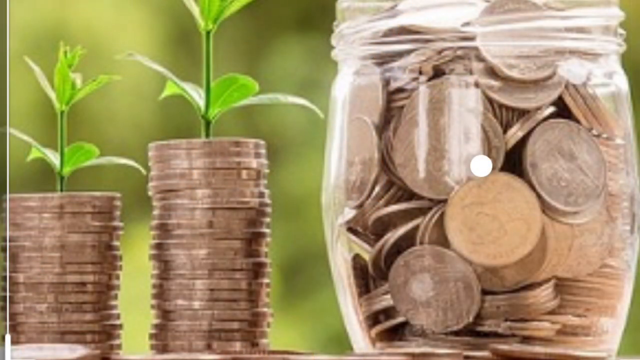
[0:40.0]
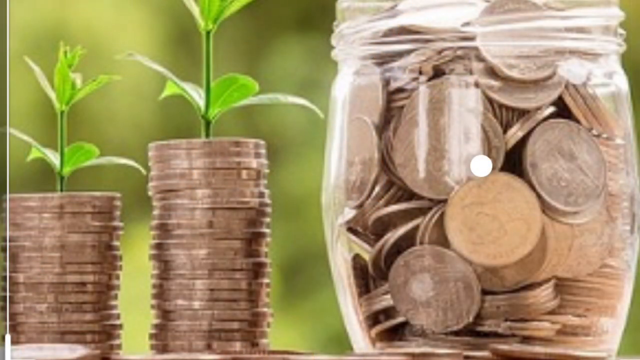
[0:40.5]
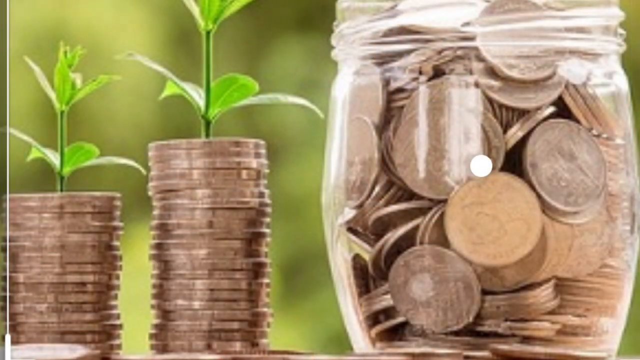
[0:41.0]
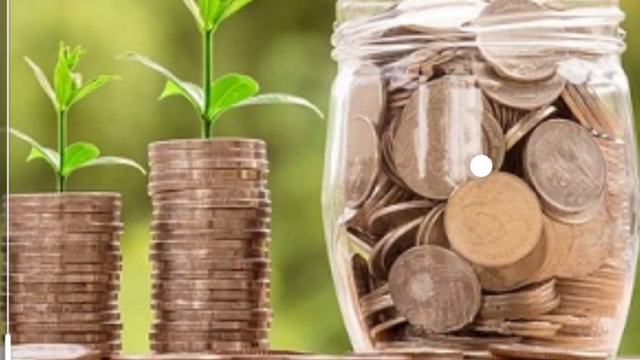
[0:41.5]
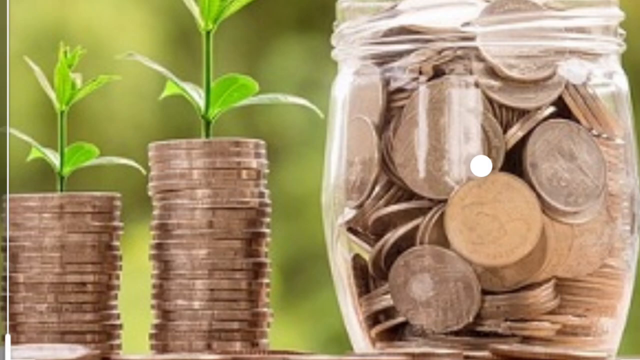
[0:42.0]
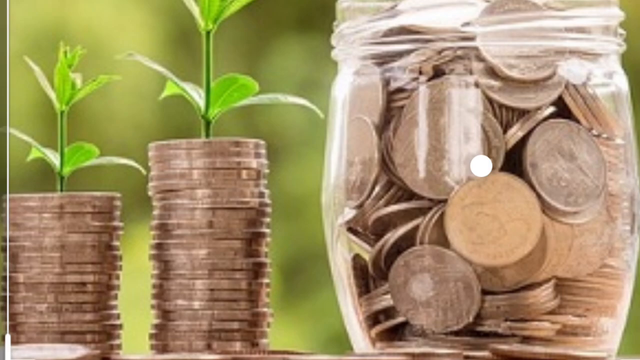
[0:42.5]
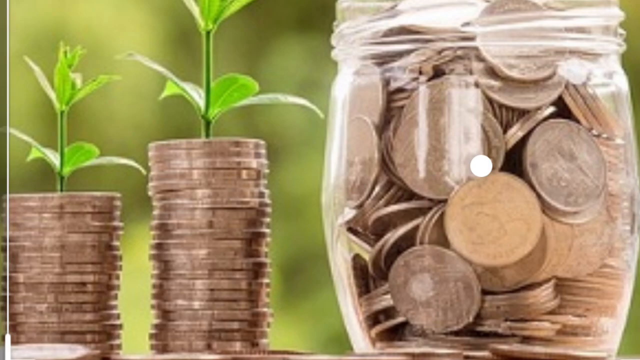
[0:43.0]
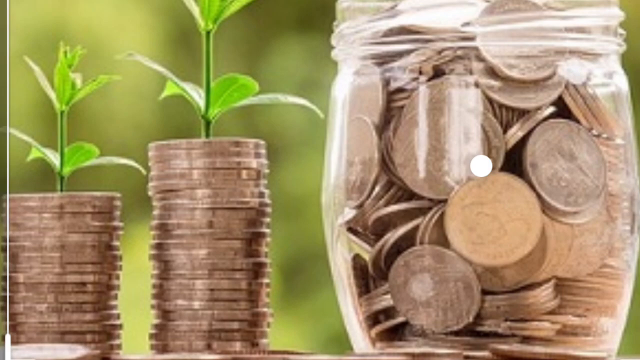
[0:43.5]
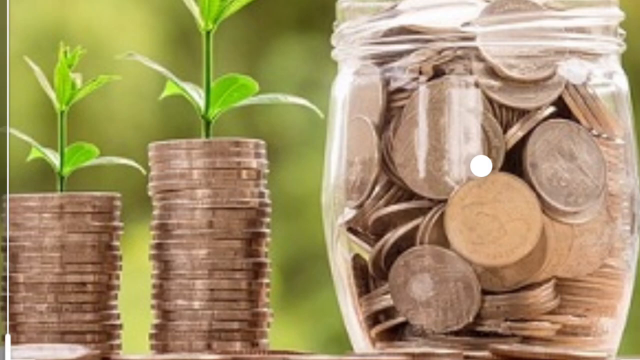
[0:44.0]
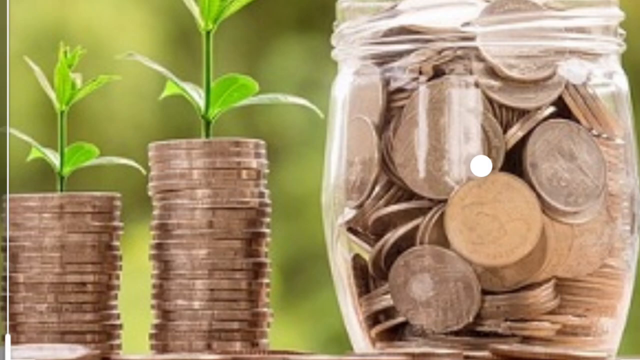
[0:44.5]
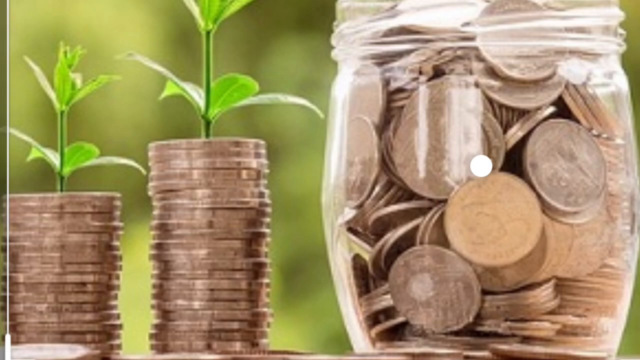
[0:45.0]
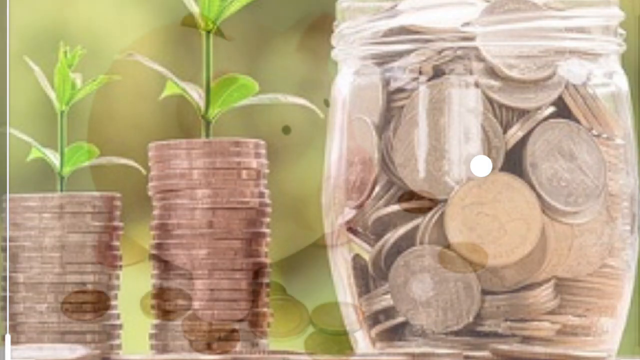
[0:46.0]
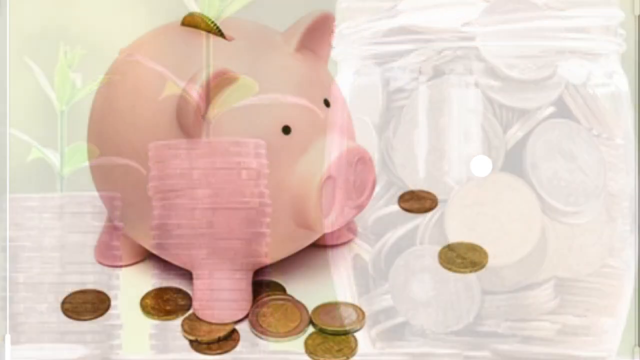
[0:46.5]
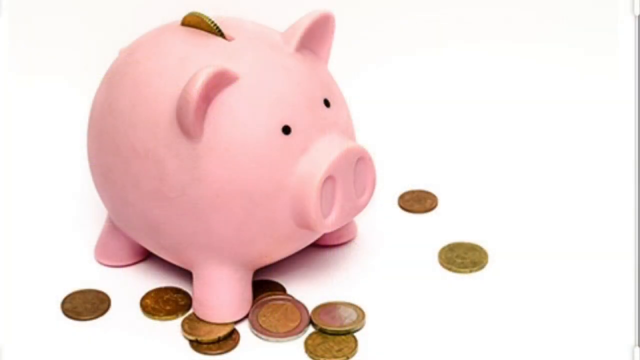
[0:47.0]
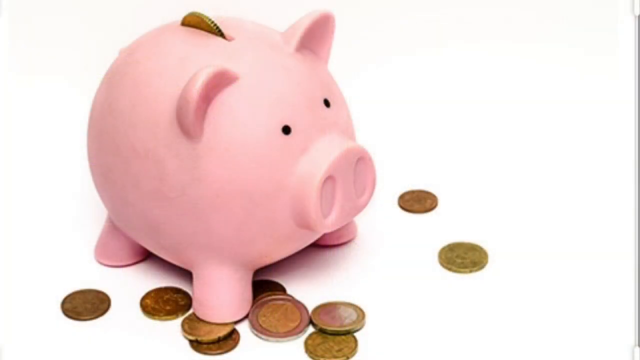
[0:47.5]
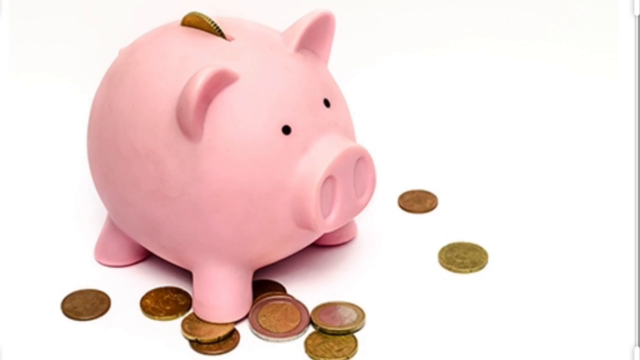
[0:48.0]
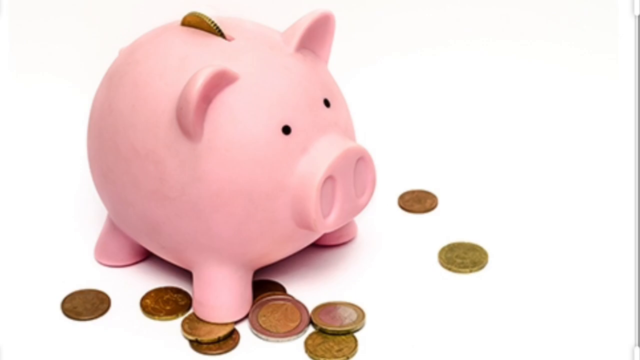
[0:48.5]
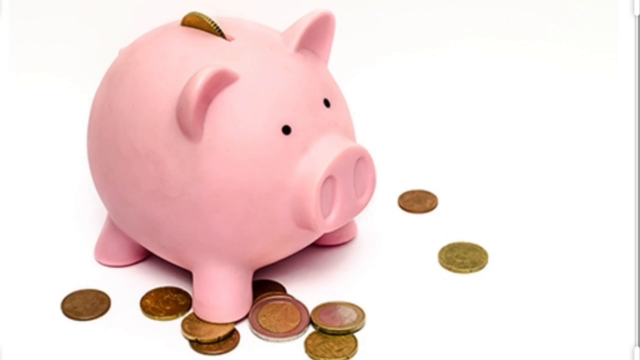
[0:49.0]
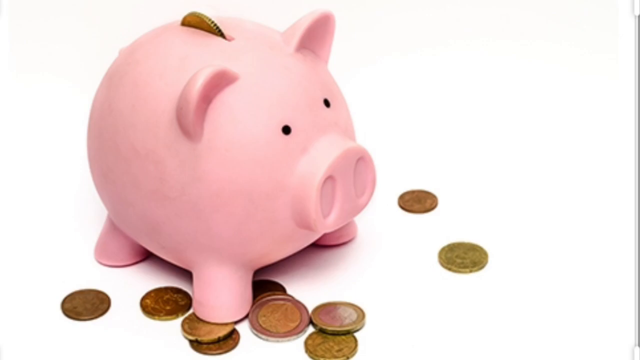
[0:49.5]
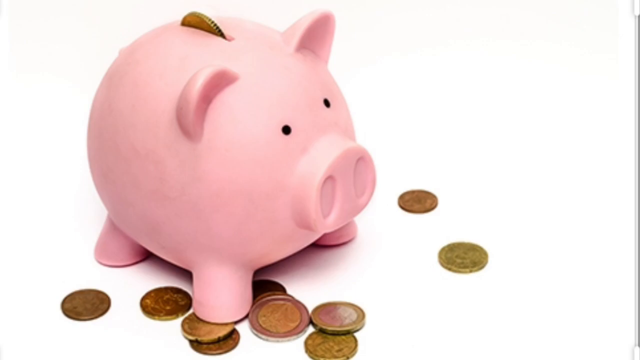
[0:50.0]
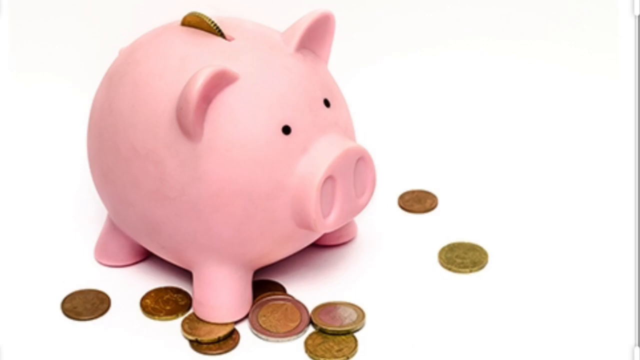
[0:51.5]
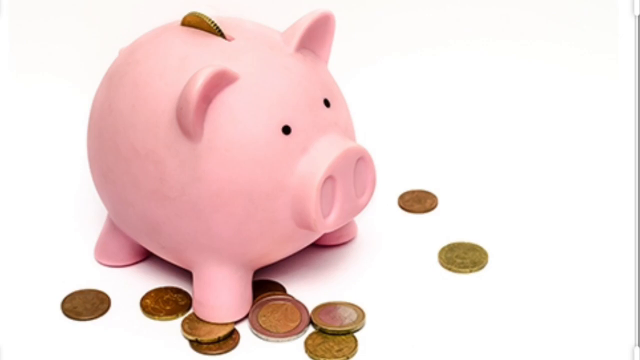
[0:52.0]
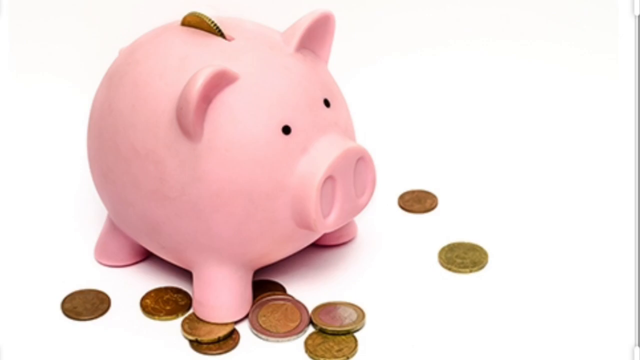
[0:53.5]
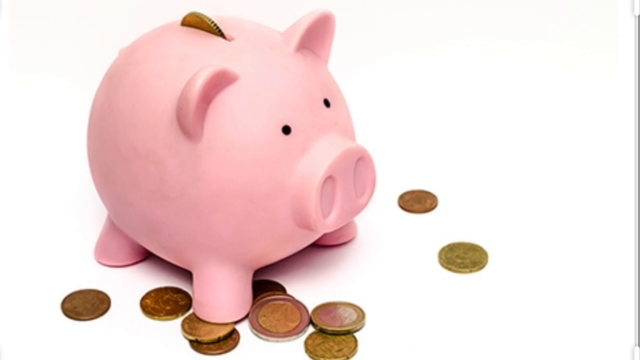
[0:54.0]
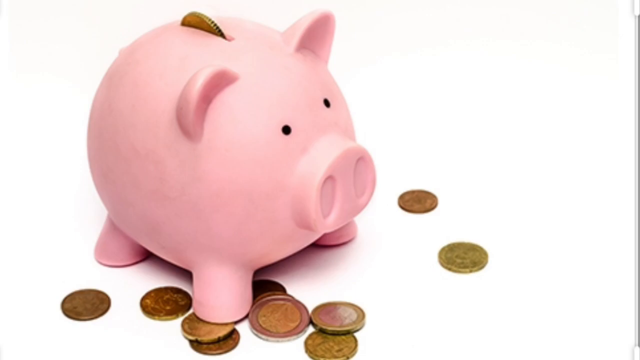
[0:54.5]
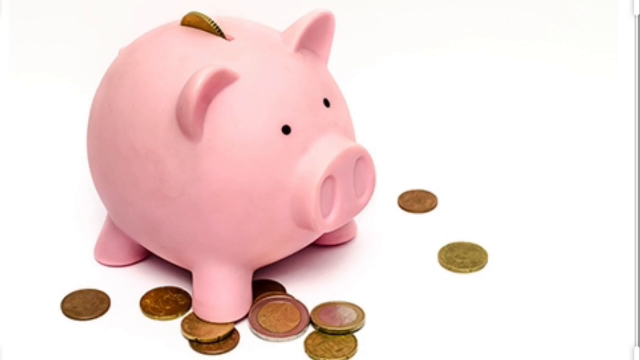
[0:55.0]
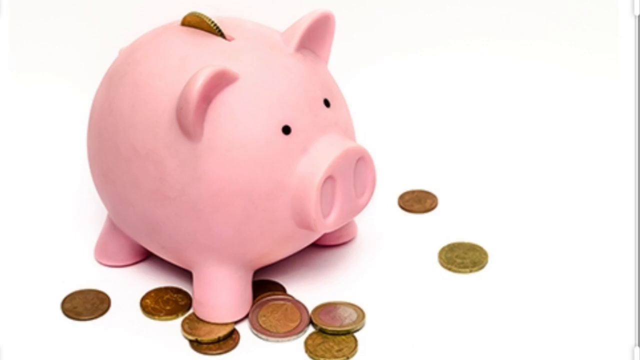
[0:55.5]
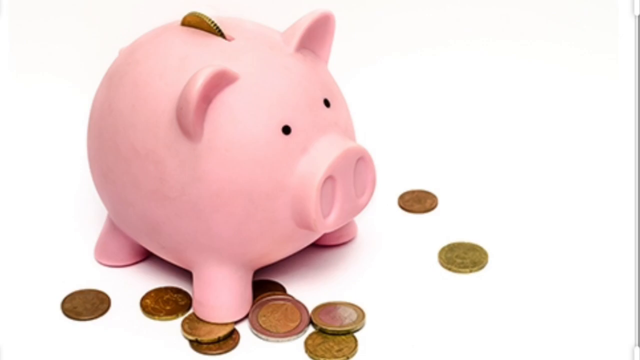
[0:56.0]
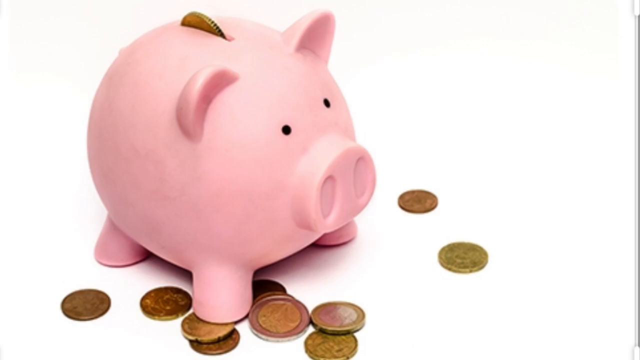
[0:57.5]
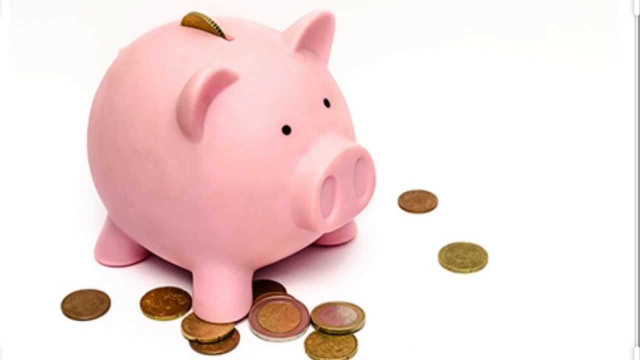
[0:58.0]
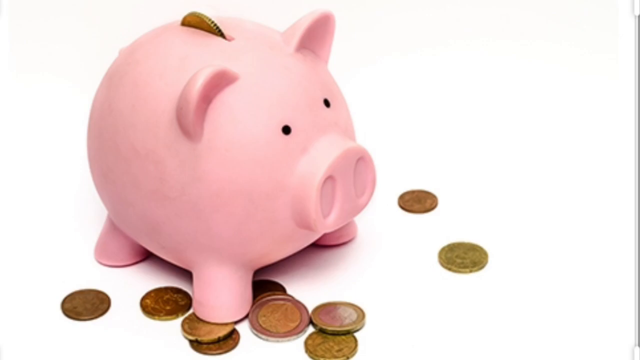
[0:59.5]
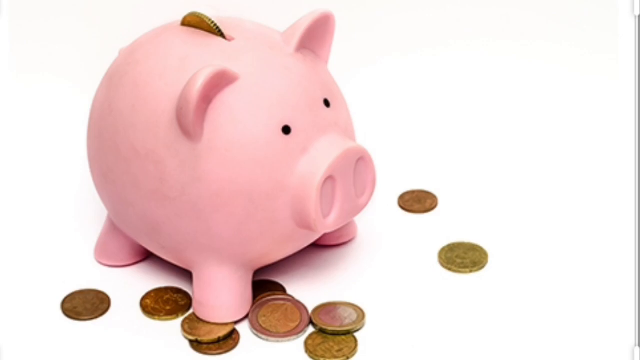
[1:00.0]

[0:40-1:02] Plants come up out of change or coins, then a jar with coins, like quarters, in it is shown. These images probably represent savings. Next a piggy bank with pennies appears; the pennies are either going into it or spilling out of it, which is unclear. The video stays on the piggy bank slide without moving to anything else.